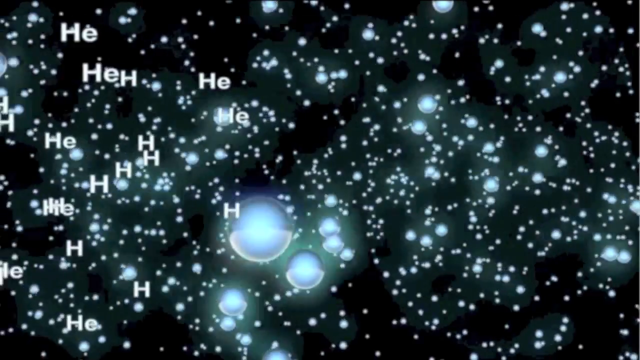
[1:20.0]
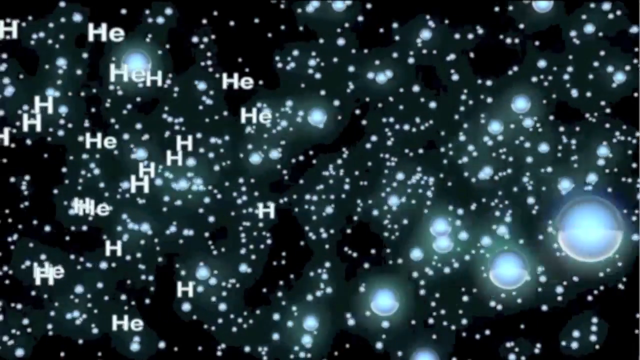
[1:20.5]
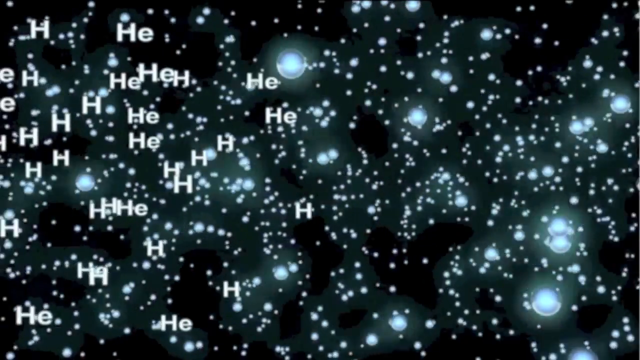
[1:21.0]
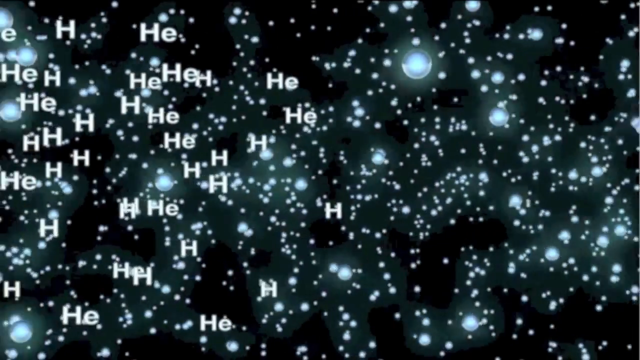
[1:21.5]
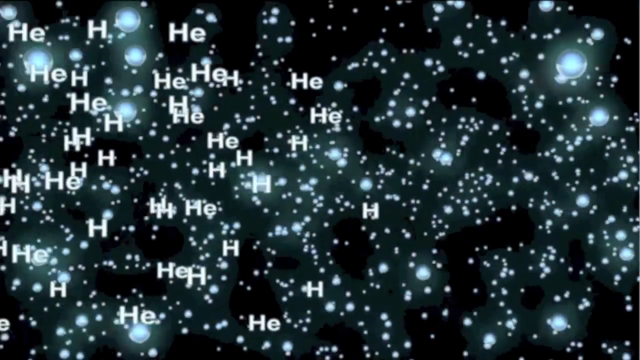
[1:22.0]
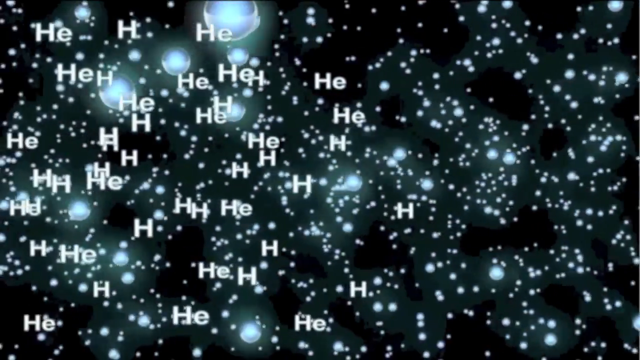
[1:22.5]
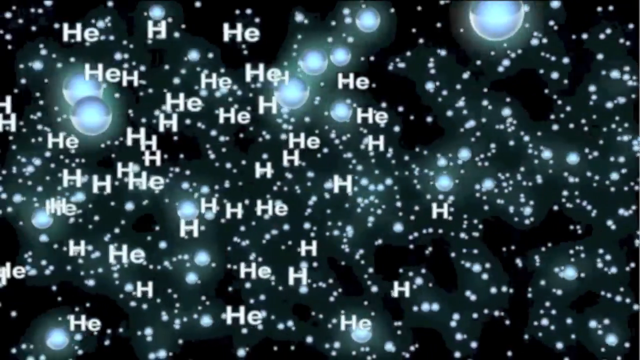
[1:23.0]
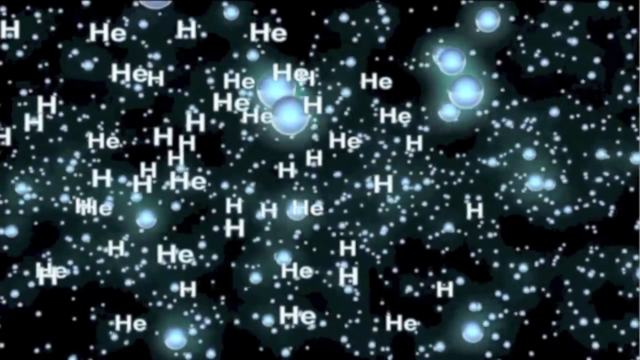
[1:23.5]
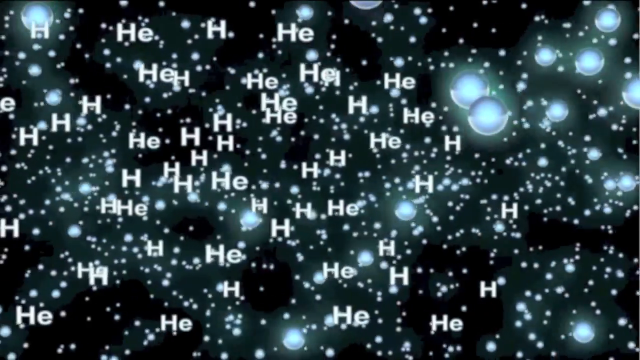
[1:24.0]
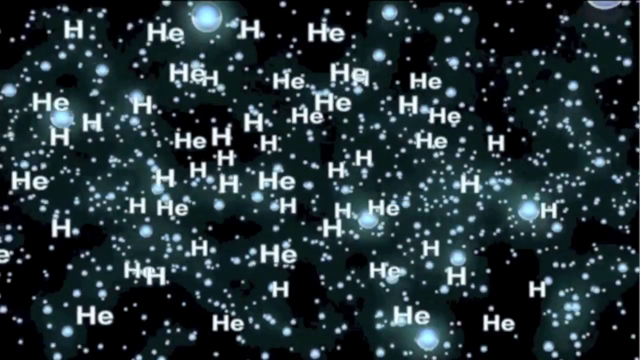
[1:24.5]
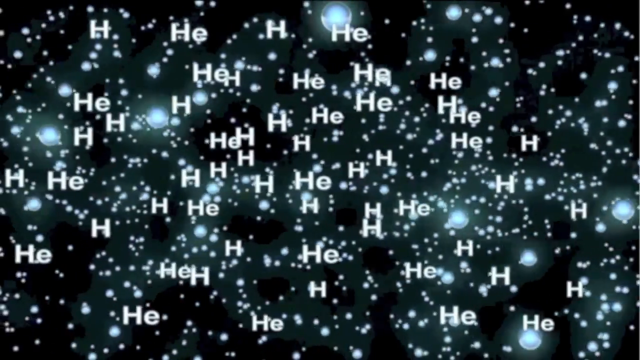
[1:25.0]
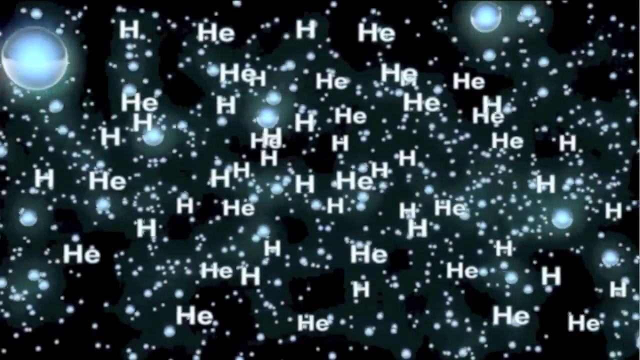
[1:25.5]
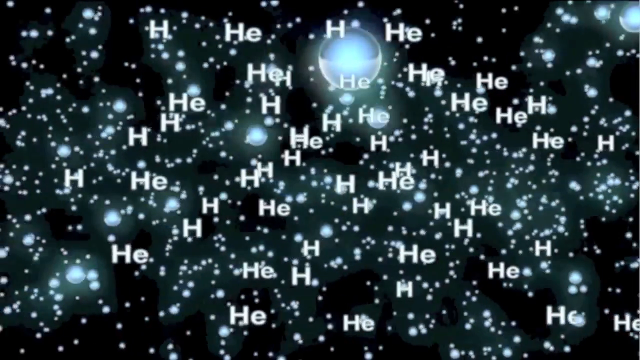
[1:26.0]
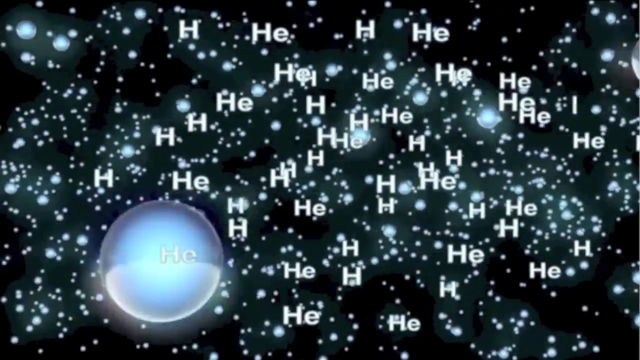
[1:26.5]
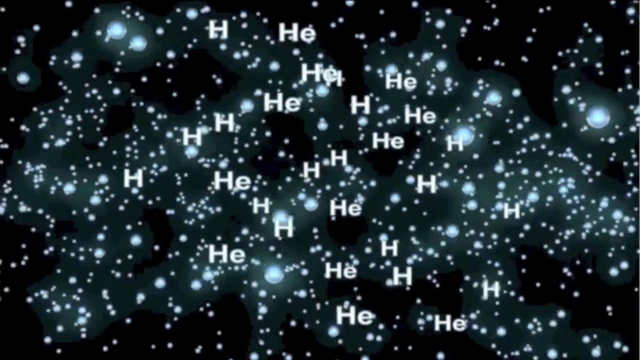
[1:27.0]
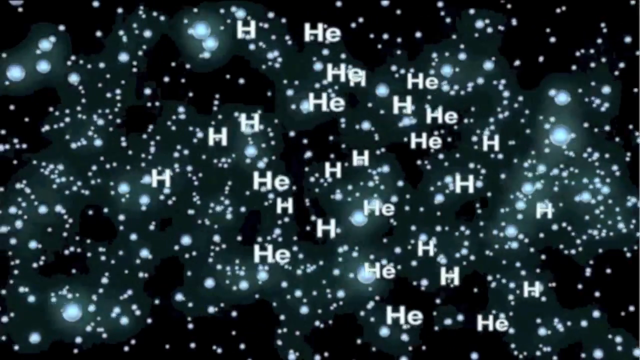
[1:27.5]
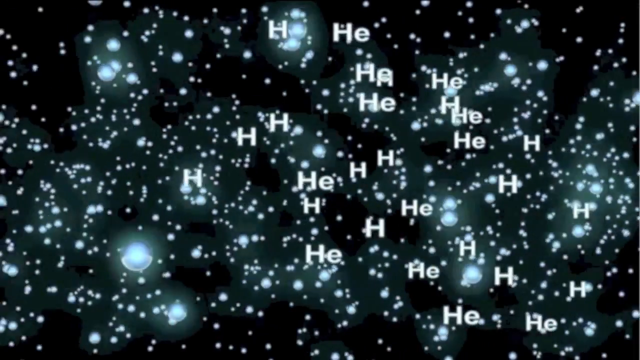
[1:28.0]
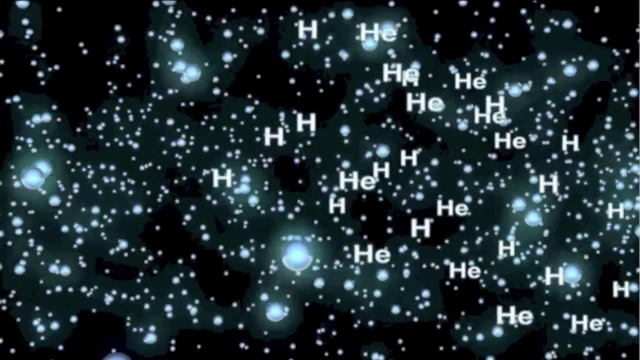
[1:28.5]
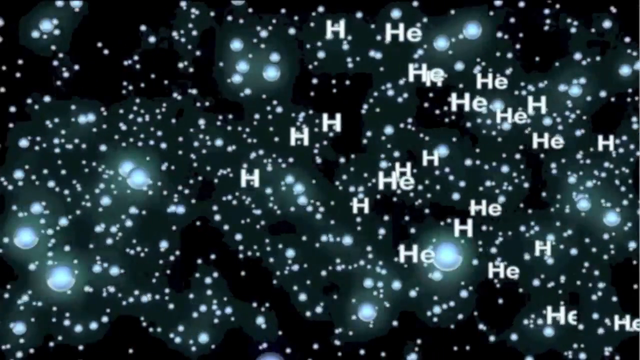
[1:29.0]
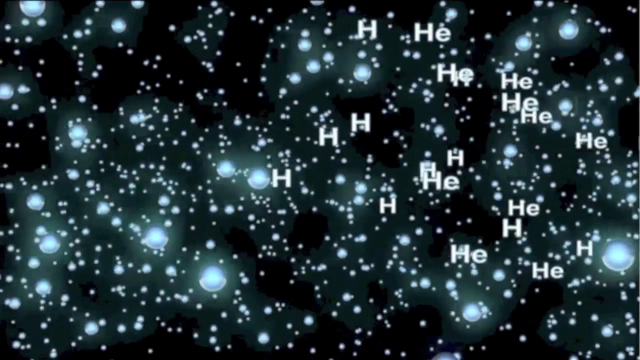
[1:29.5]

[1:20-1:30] Multiple glowing blue spheres travel from left to right against a solid black background. Many of the spheres are interspersed with white letters, a mixture of a capital "H" by itself and a capital H with a lowercase e, "He." The spheres are slowly replaced by these letters as they travel slowly from the left of the screen toward the right. More and more letters appear, then they start to disappear halfway across the screen and are fully replaced by the blue glowing spheres.